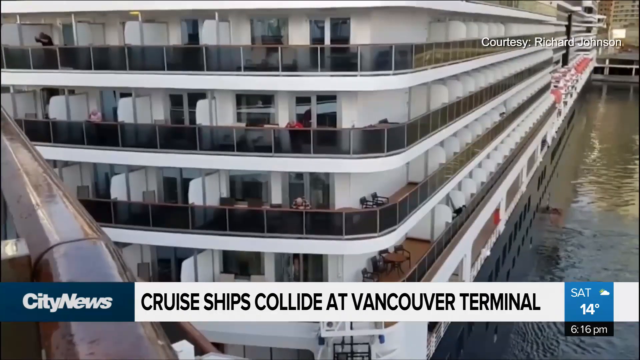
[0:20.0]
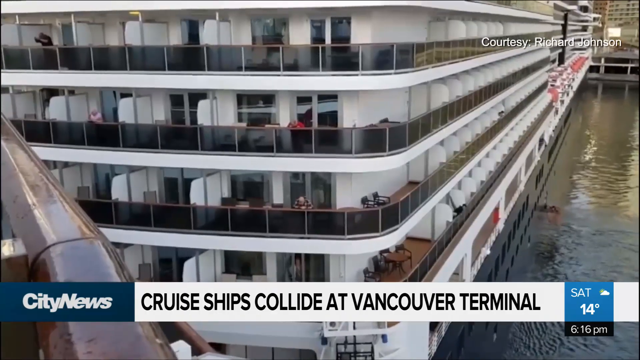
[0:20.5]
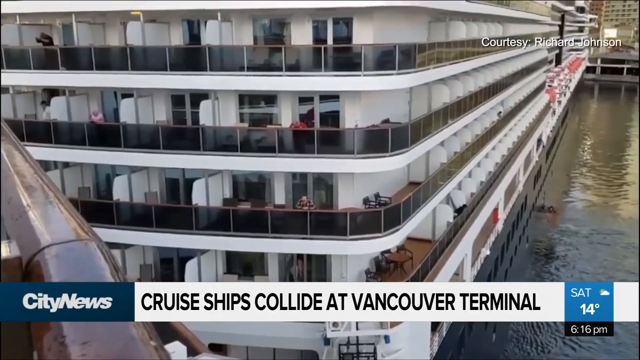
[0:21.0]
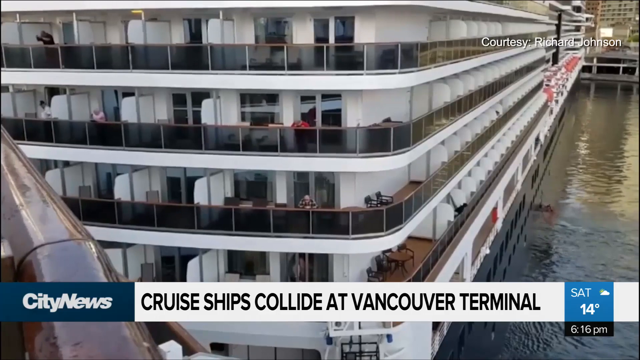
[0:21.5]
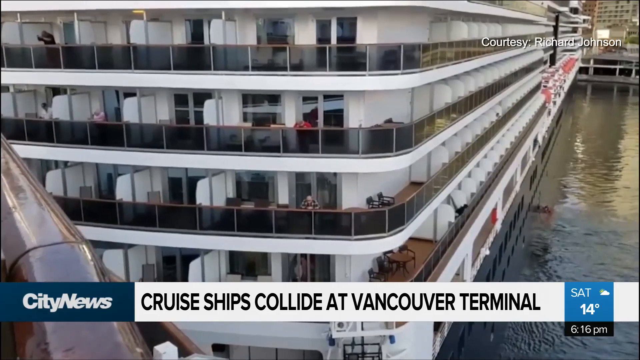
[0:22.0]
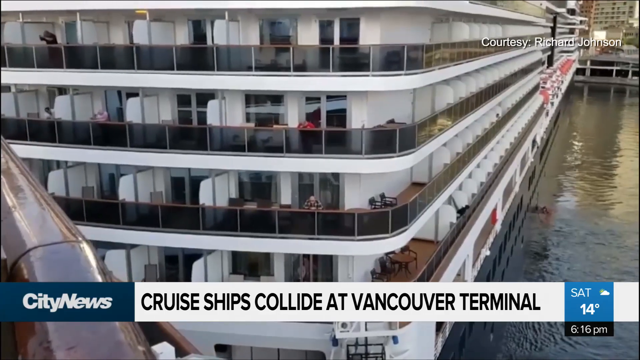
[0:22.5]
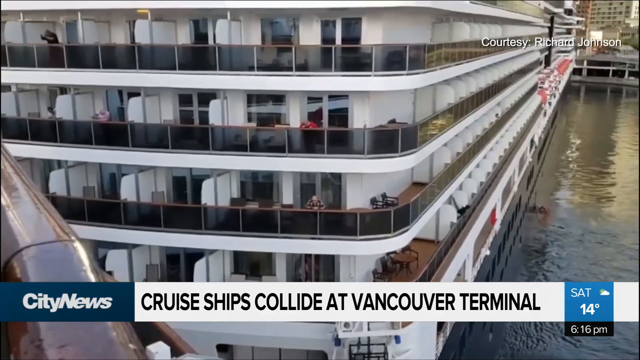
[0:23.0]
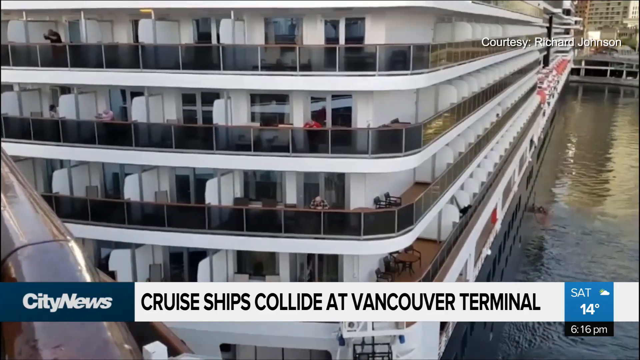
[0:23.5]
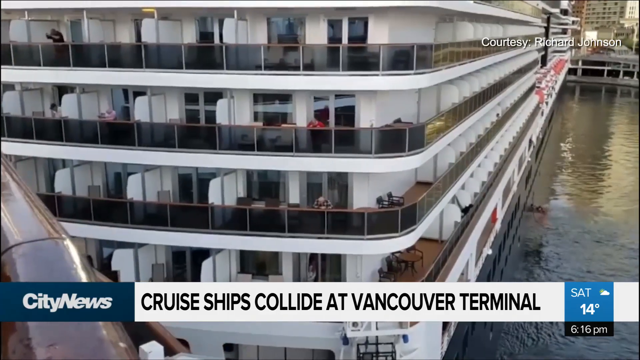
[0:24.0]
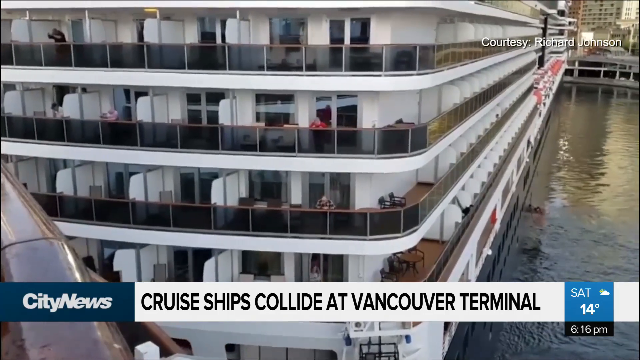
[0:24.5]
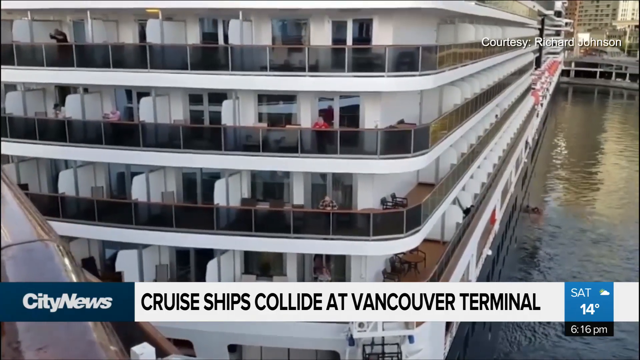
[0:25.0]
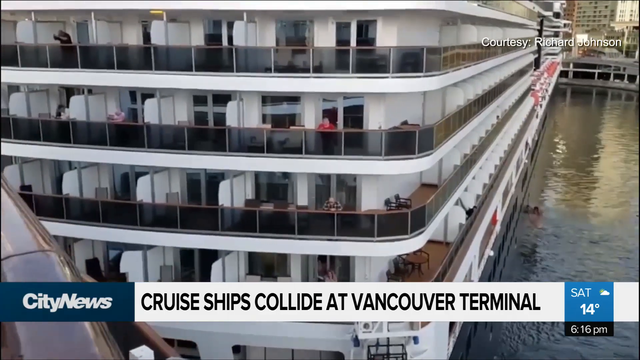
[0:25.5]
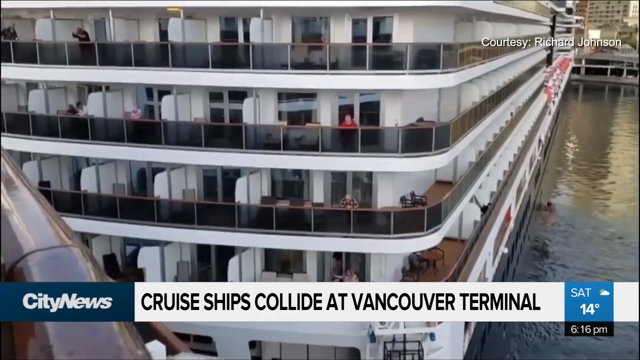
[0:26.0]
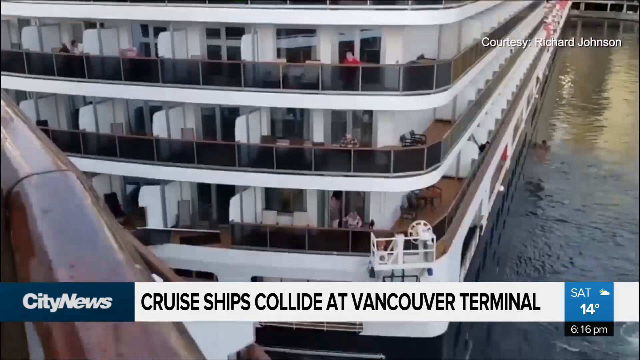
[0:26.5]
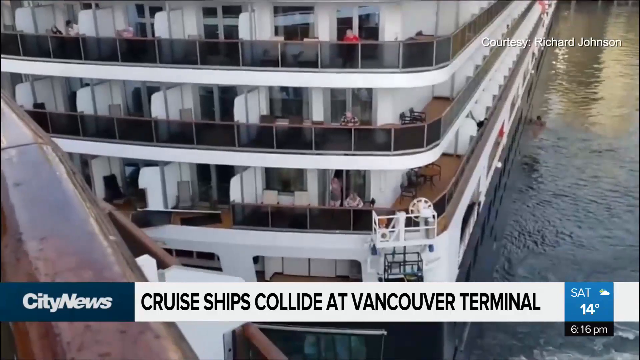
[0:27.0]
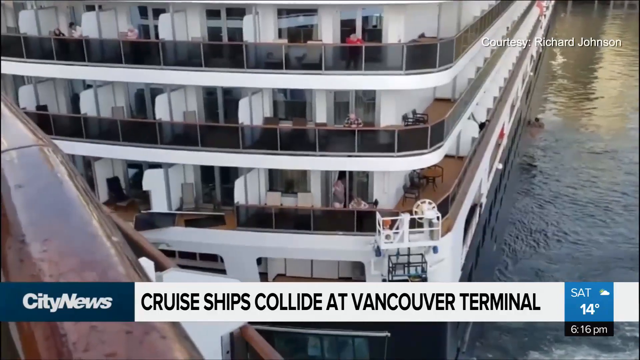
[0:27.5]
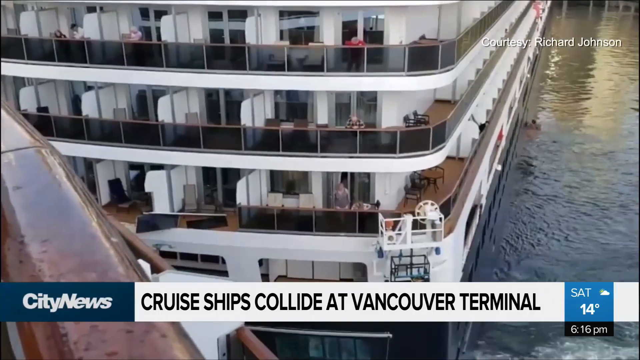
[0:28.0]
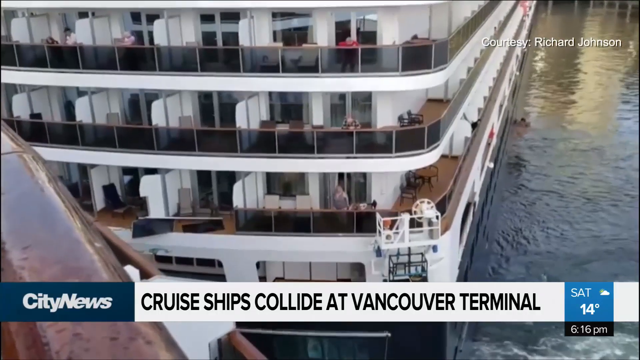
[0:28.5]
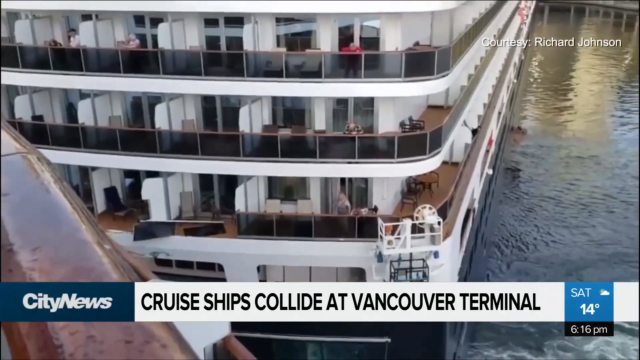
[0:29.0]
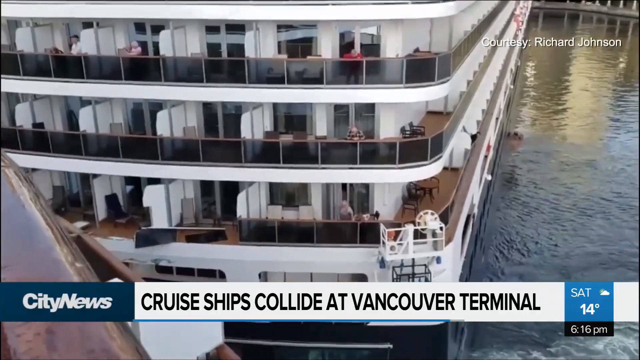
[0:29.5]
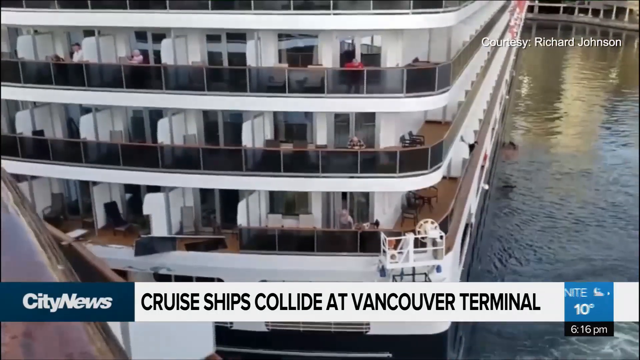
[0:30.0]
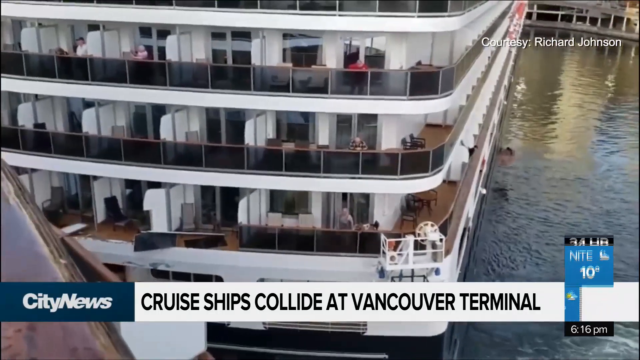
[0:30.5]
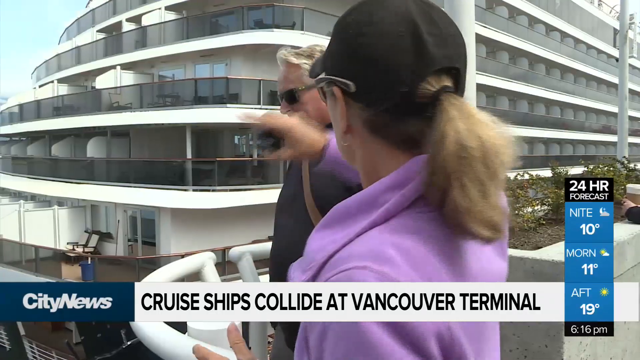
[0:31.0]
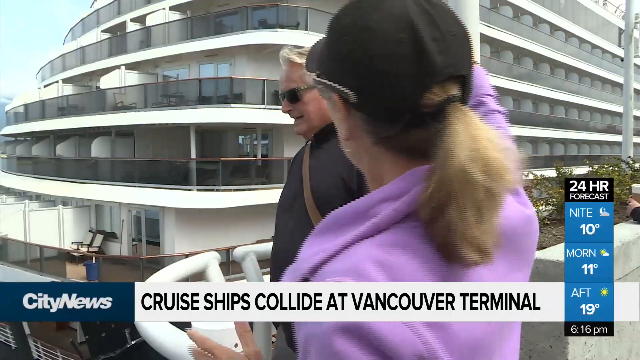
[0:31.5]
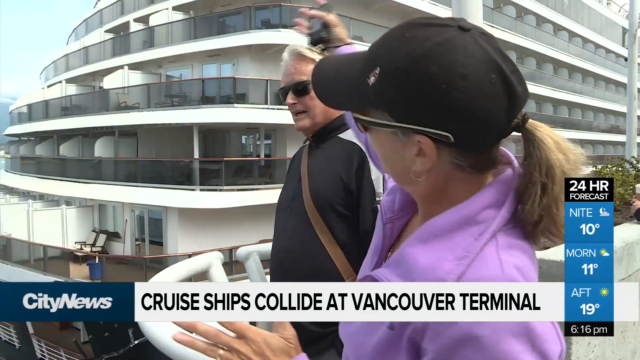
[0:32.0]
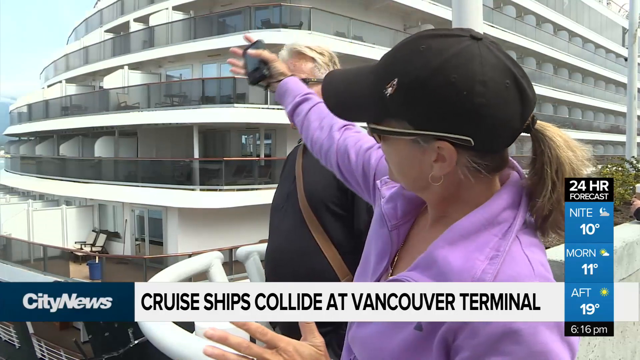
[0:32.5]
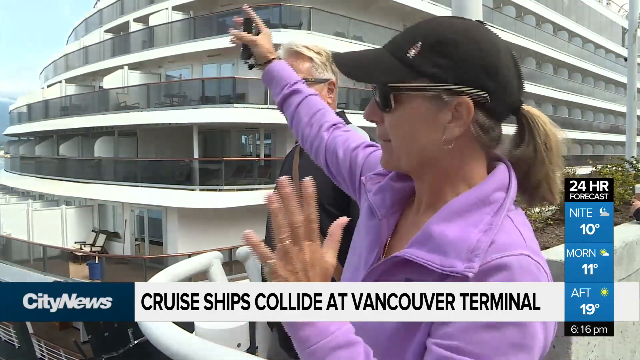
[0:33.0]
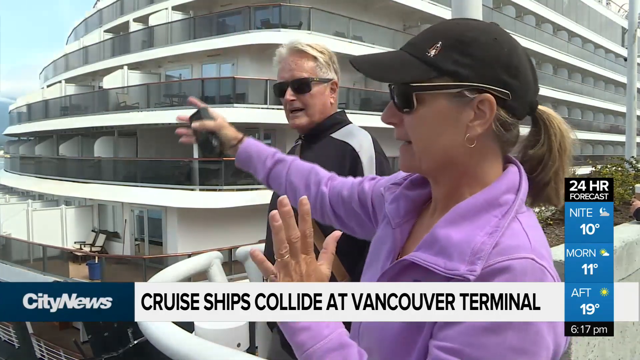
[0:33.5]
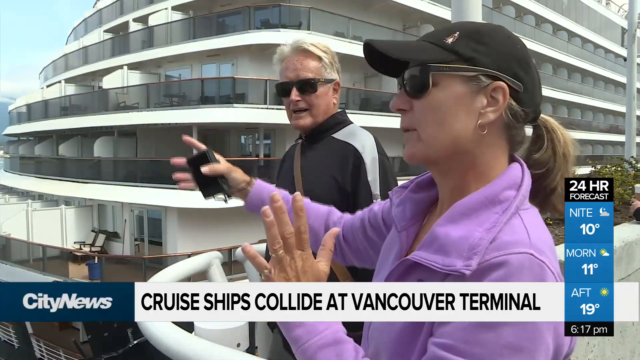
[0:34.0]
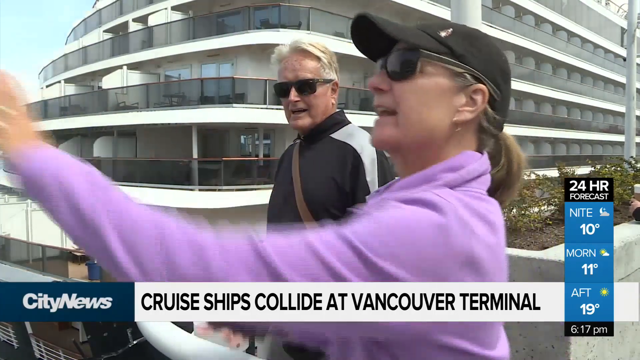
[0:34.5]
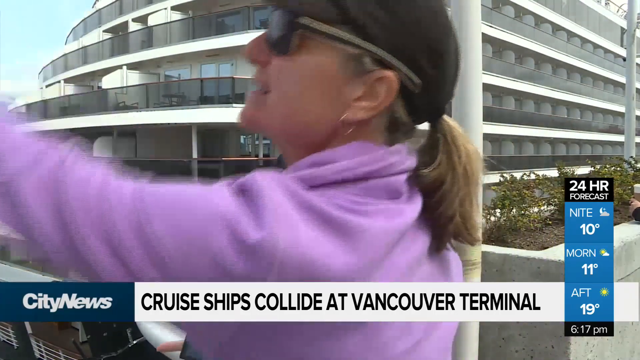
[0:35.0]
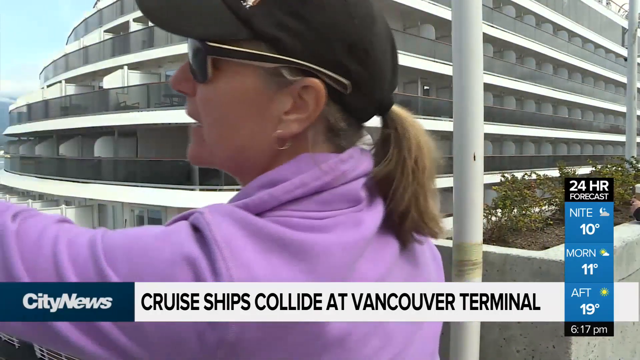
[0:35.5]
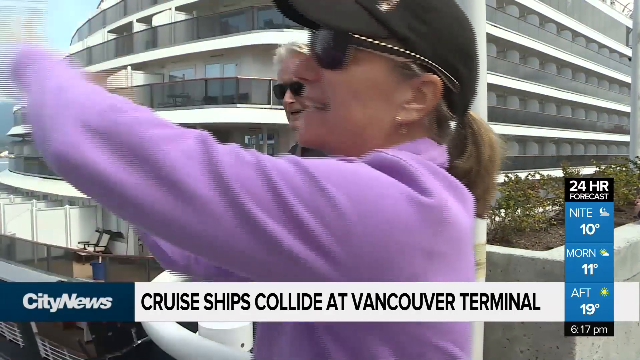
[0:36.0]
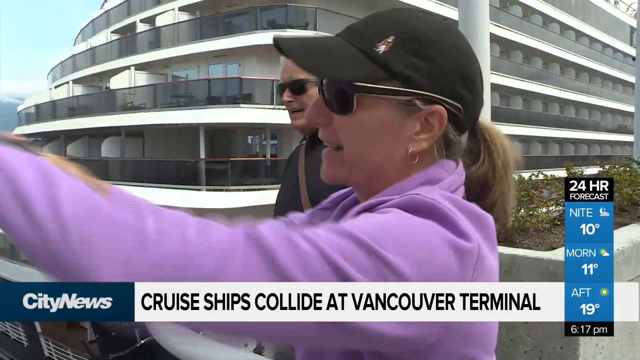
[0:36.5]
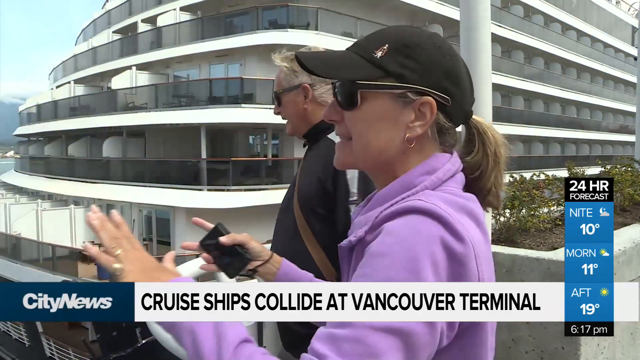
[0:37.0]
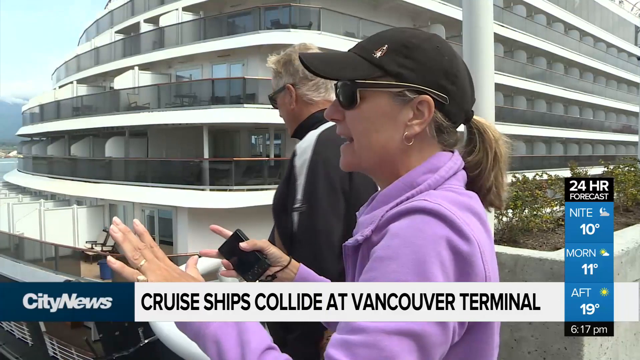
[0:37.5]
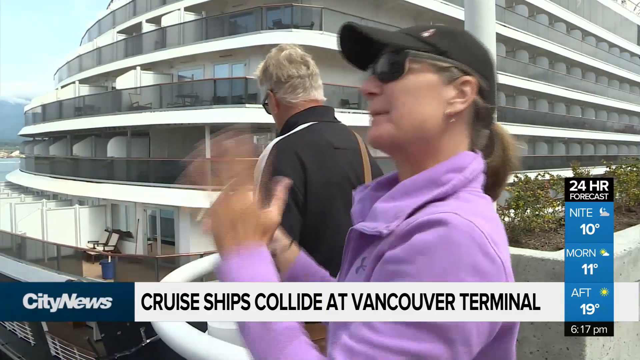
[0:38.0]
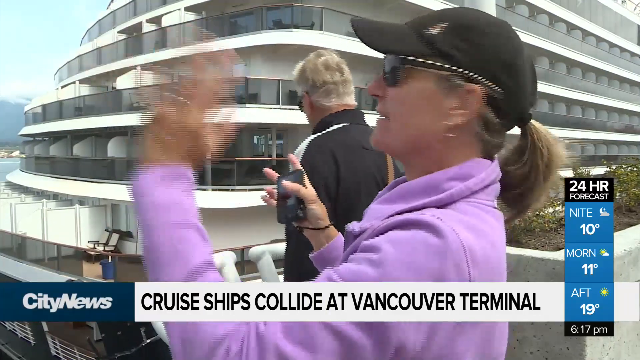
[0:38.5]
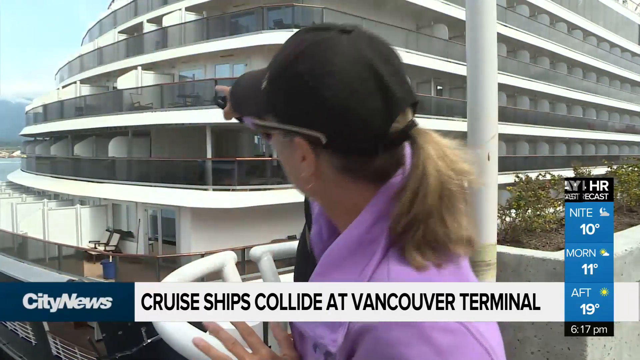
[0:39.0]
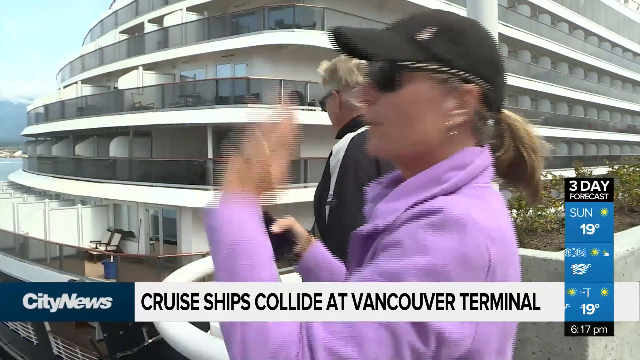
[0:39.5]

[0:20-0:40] The segment cuts back to the cruise ship in the port, which is now slowly drifting away. The white ship is five levels high with observational railings on each level. As it slowly moves, three people on board stand at the railings. A banner beneath the image reads "cruise ships collide at Vancouver terminal". After four seconds, the shot cuts to two people being interviewed. The first is a woman in her 50s wearing dark sunglasses, a black baseball cap and a purple tracksuit; she speaks with very animated gestures and waves. Her husband stands just behind her quietly, wearing a black tracksuit and black sunglasses; he has grayish hair, is also in his 50s, and listens and nods as she talks. After about six seconds, the video cuts back to the same image of the cruise ship with the banner "cruise ships collide at Vancouver terminal" beneath it.